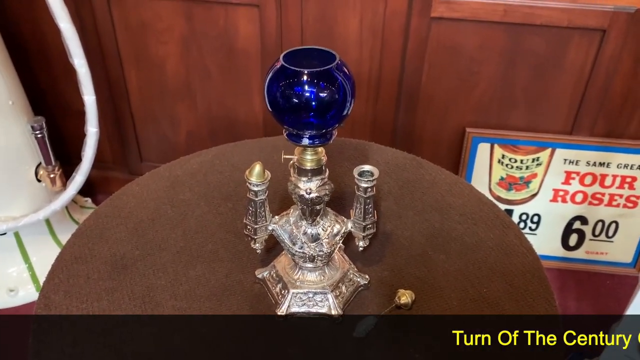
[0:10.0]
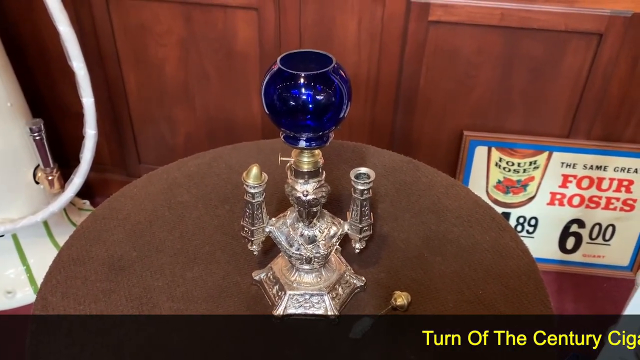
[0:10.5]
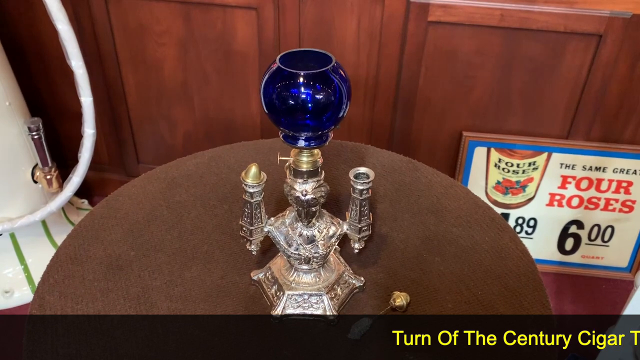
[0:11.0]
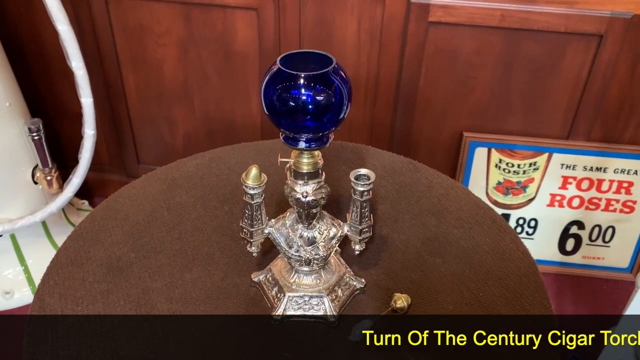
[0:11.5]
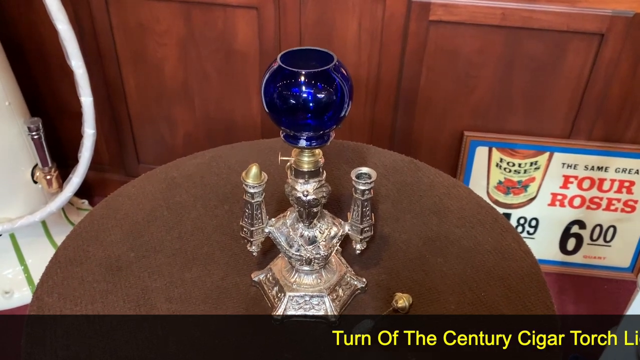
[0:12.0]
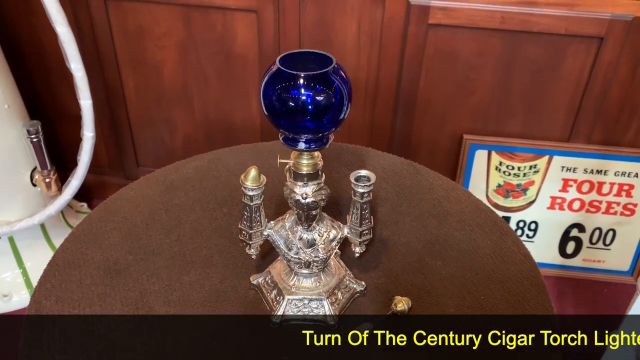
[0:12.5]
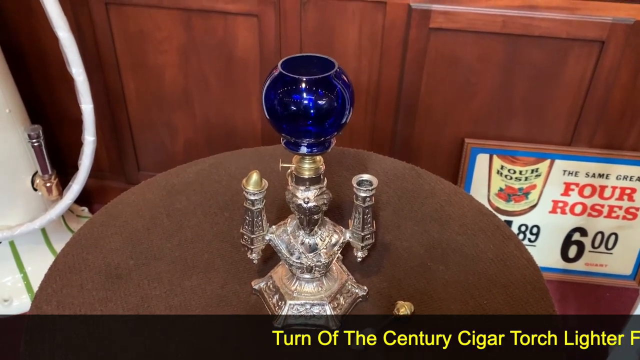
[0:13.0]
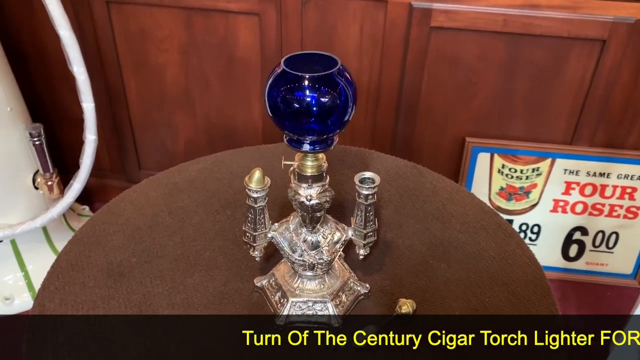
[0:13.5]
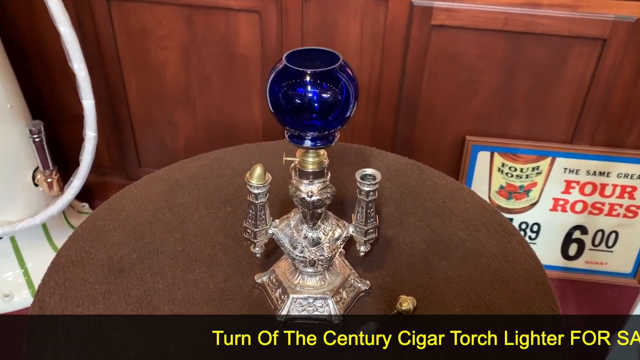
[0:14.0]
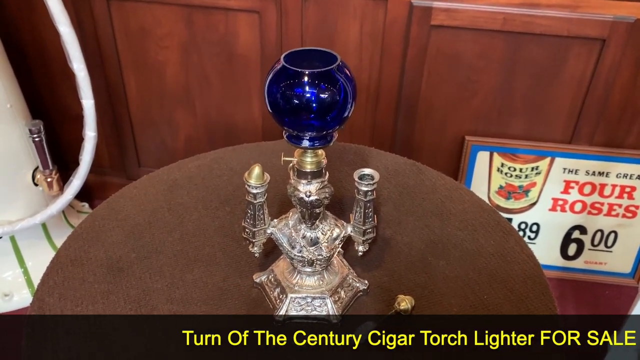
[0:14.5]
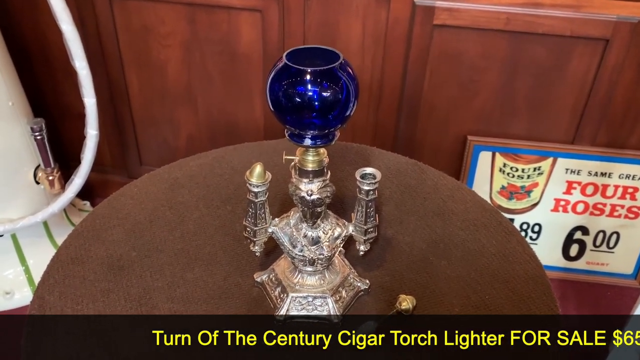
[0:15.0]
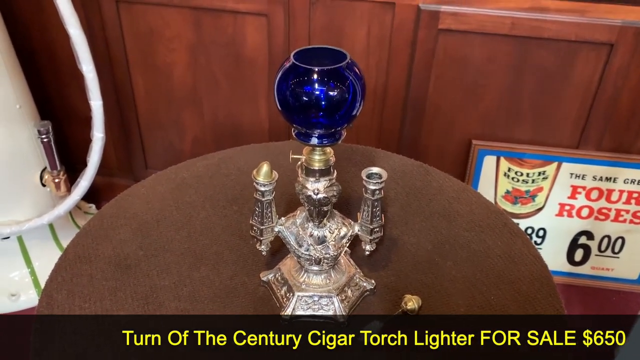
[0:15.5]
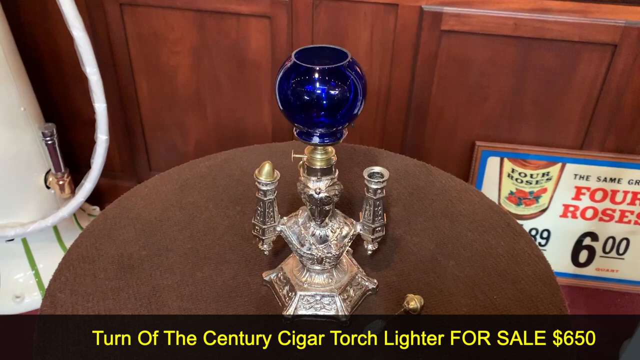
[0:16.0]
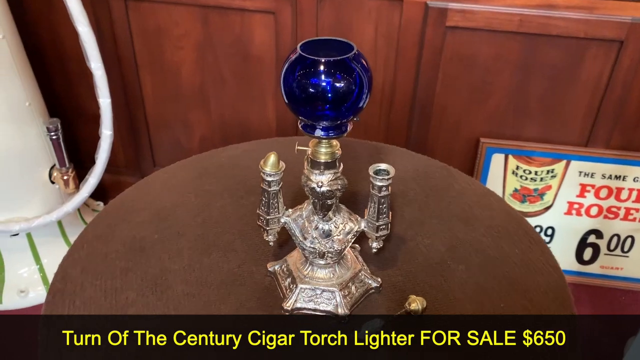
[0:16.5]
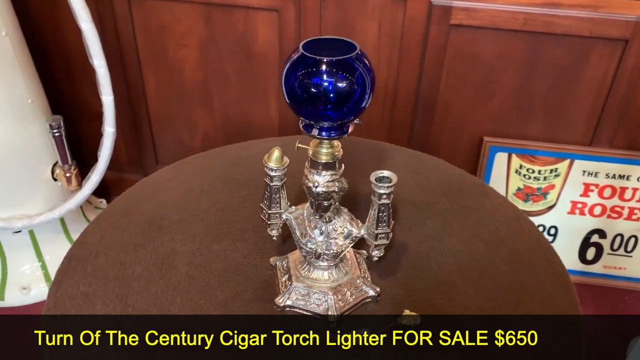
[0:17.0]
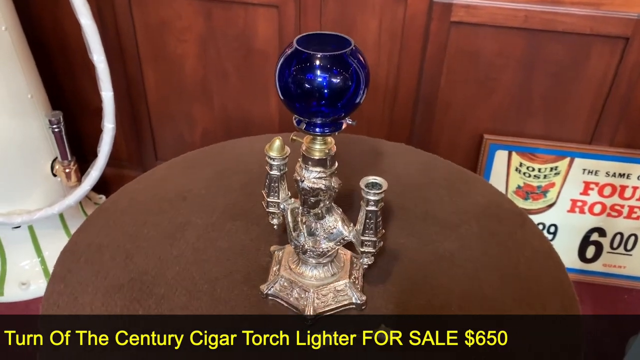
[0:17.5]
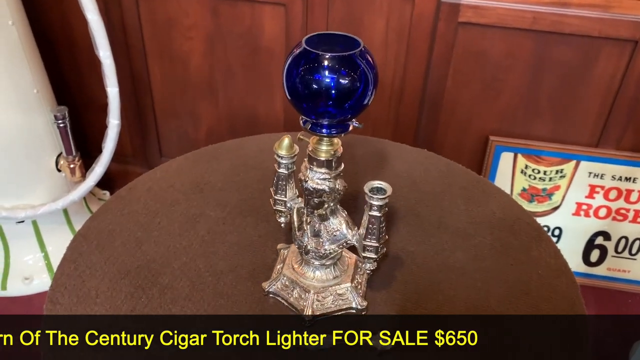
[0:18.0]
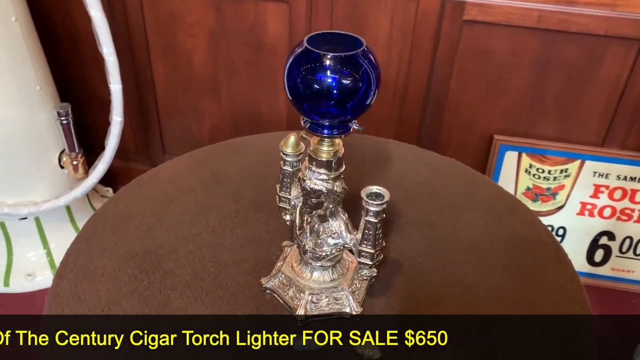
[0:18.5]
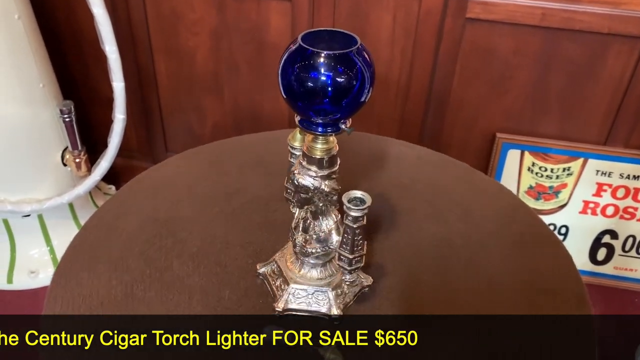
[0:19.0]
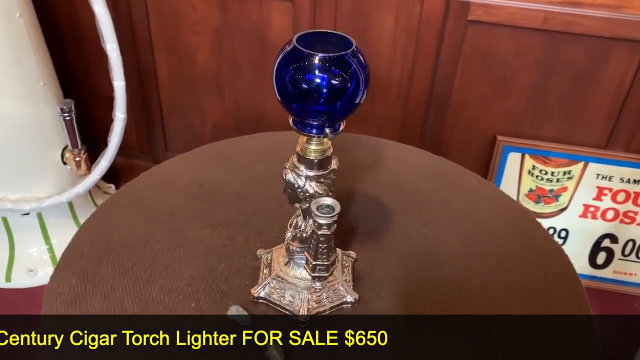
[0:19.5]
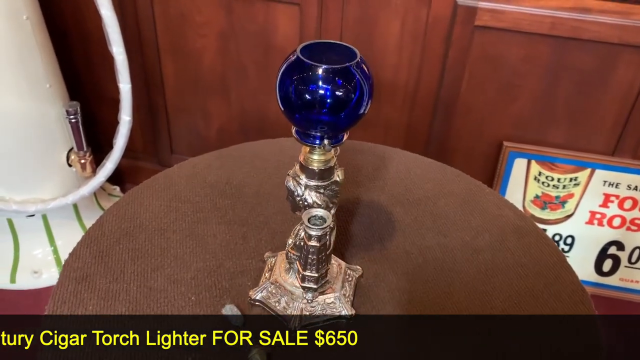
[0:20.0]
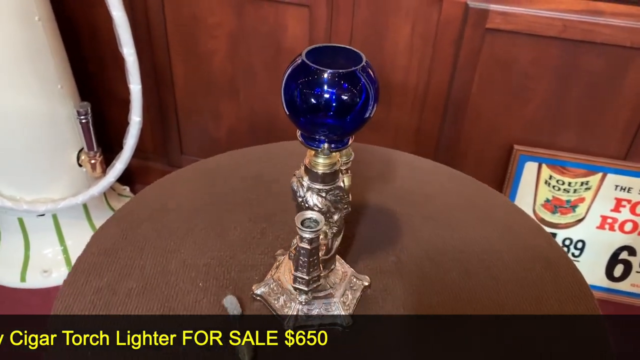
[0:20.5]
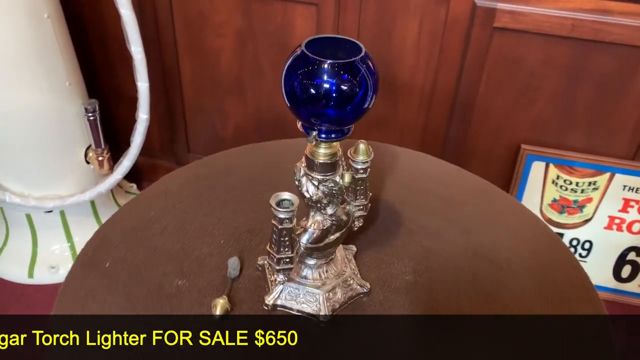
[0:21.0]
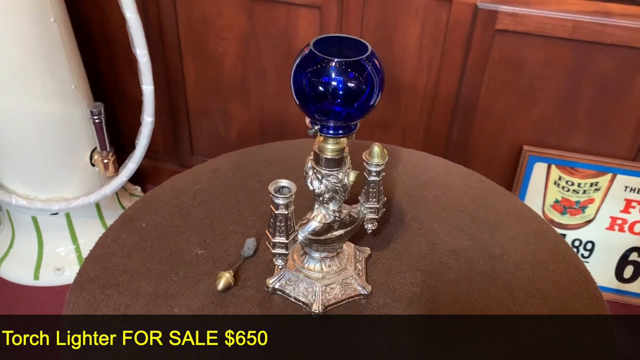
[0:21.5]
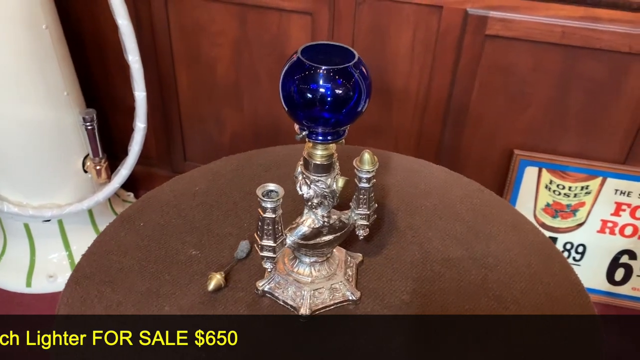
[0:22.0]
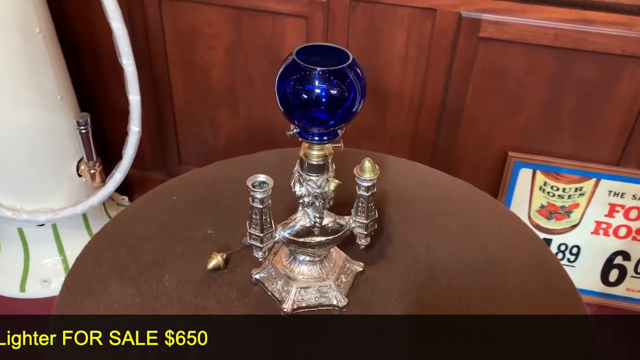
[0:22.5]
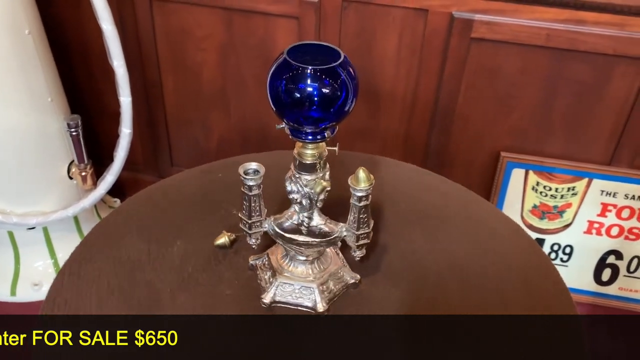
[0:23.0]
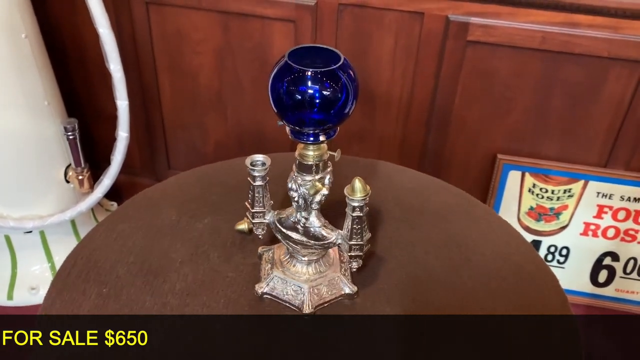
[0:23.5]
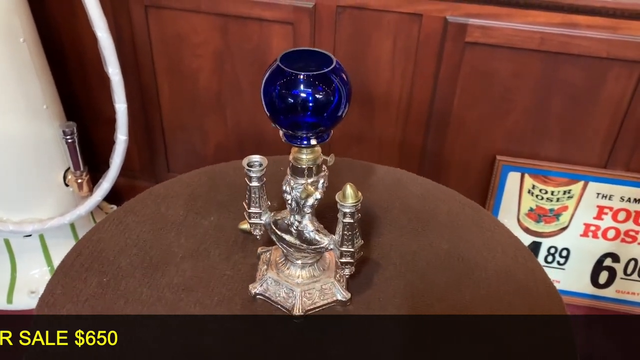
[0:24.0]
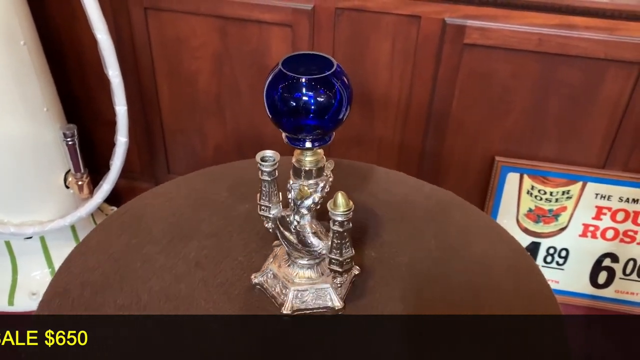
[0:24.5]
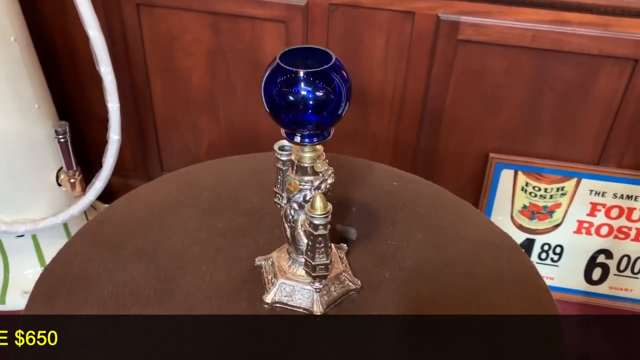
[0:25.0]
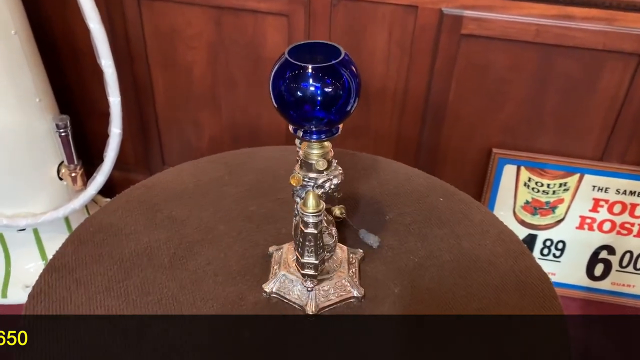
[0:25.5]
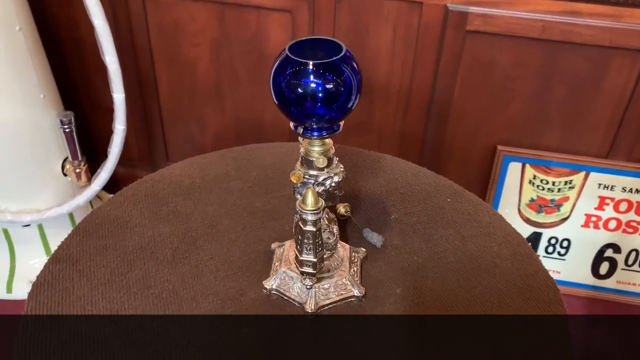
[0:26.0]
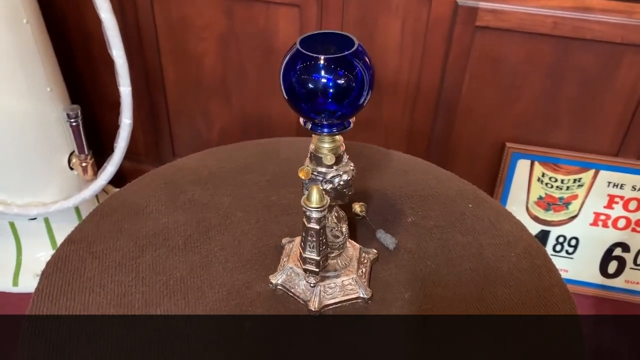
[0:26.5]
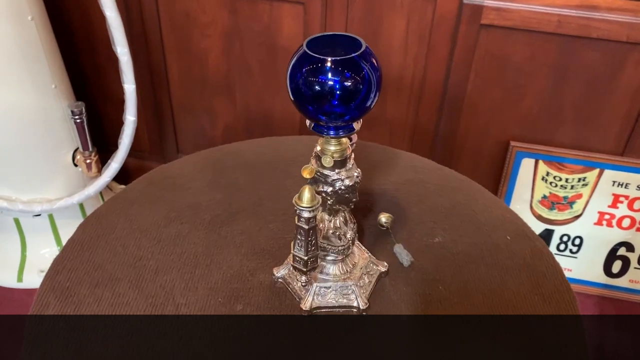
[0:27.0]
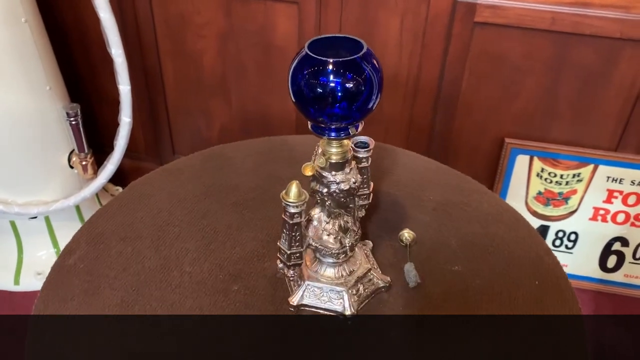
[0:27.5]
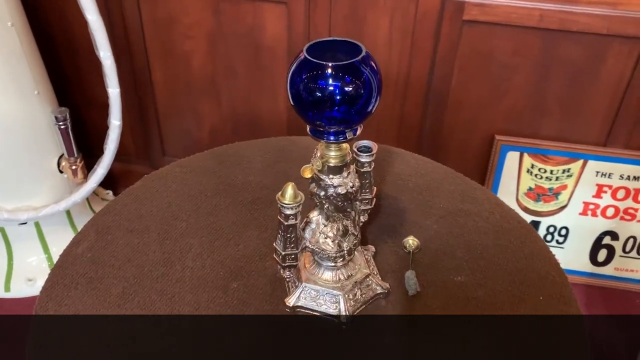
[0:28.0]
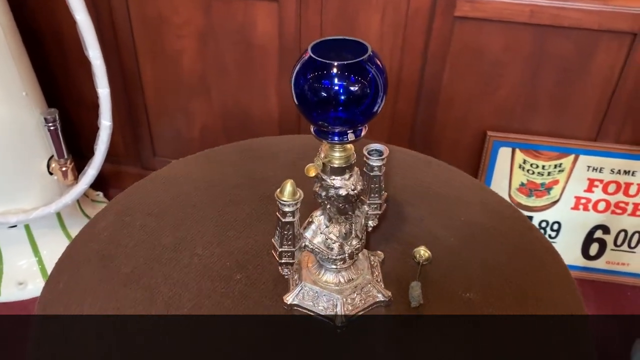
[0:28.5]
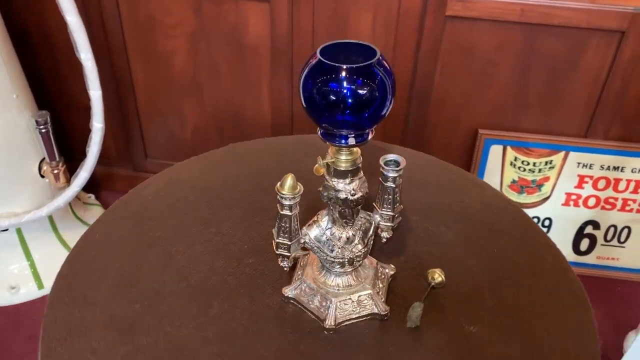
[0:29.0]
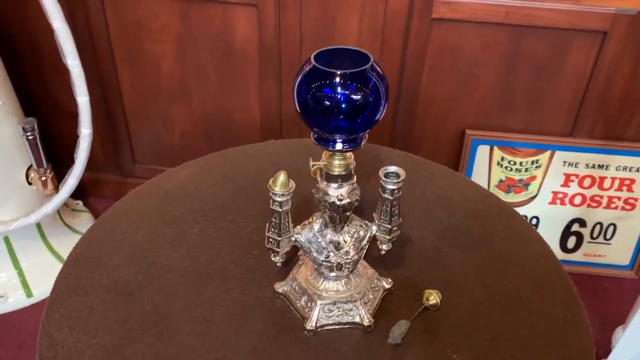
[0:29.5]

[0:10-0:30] The object is on a small circular brown table. It appears to be a blue glass bulb on top of some sort of metal structure, apparently a hookah base. The structure is spun on the table, rotating to the right in a full 360 to show the whole object. Words at the bottom of the screen read "Turn of the Century Cigar Torchlighter for sale, $650." In the back is a sign for Four Roses, with pricing that seems to read $4.89 followed by $6.00. To the left is some sort of unidentified white device.